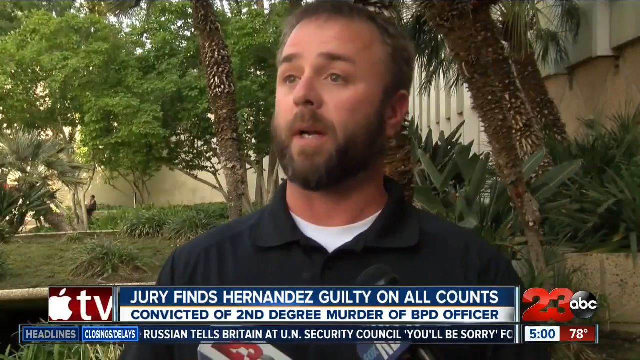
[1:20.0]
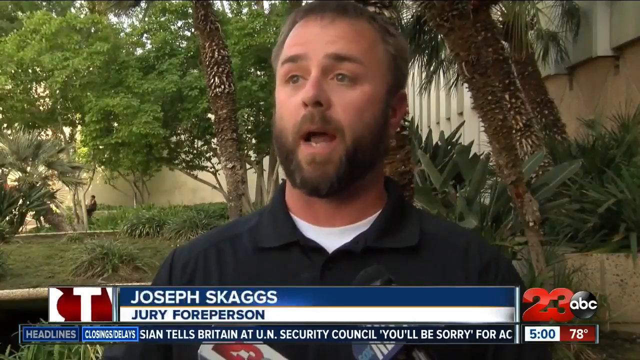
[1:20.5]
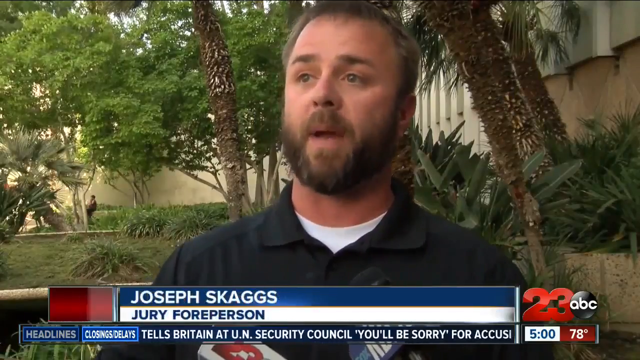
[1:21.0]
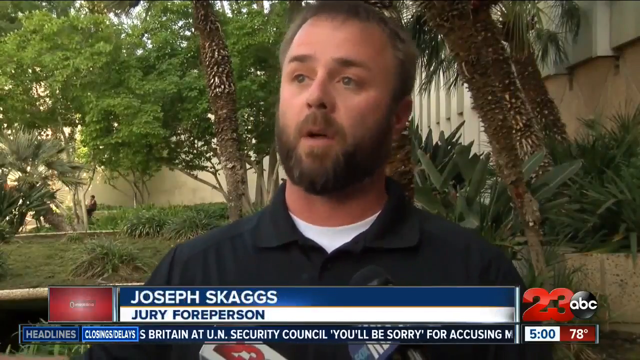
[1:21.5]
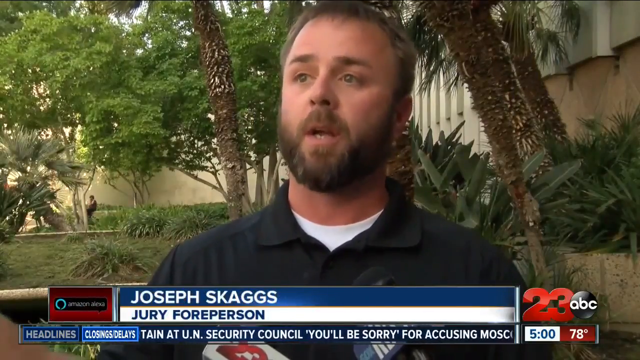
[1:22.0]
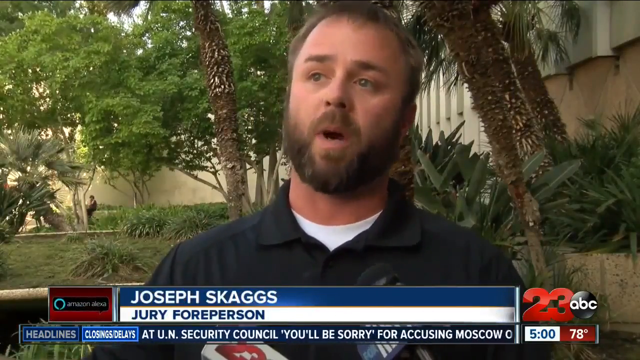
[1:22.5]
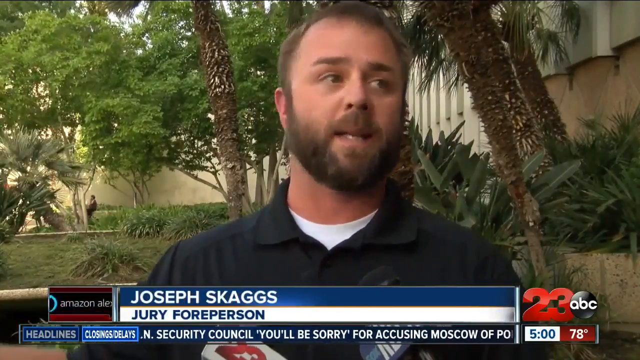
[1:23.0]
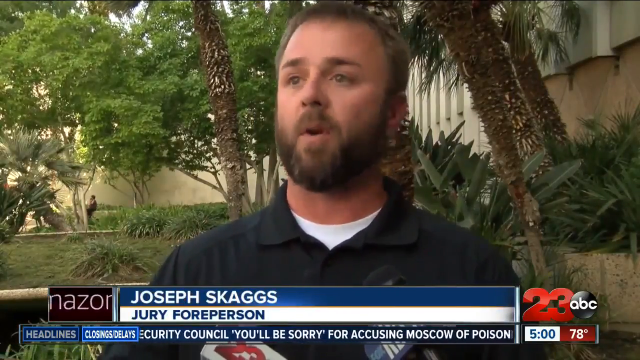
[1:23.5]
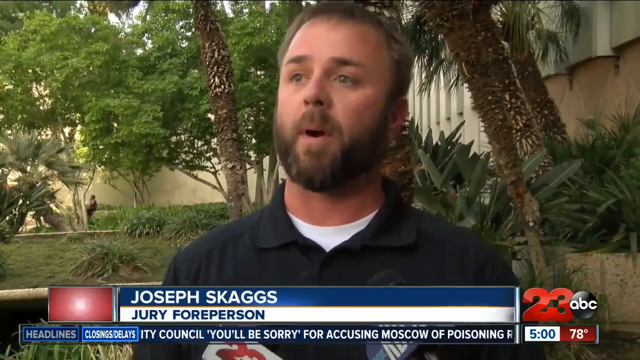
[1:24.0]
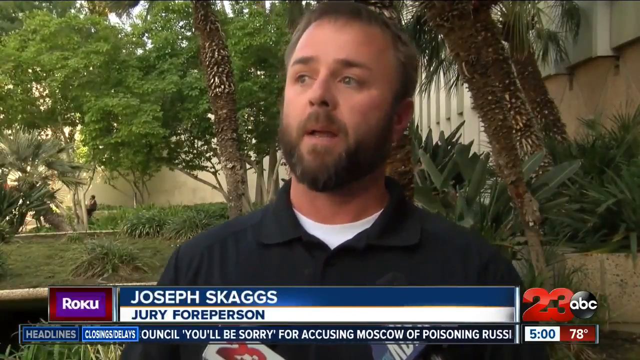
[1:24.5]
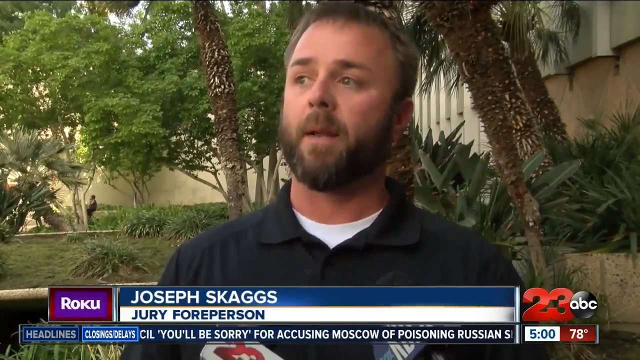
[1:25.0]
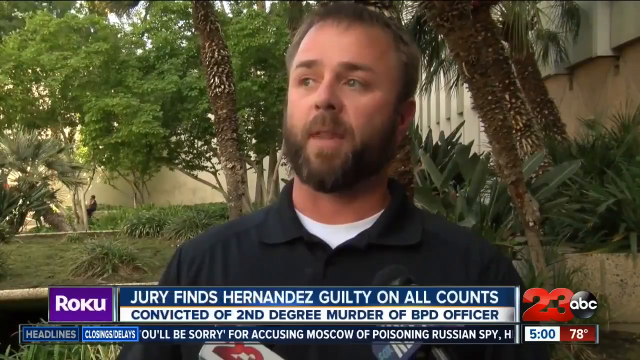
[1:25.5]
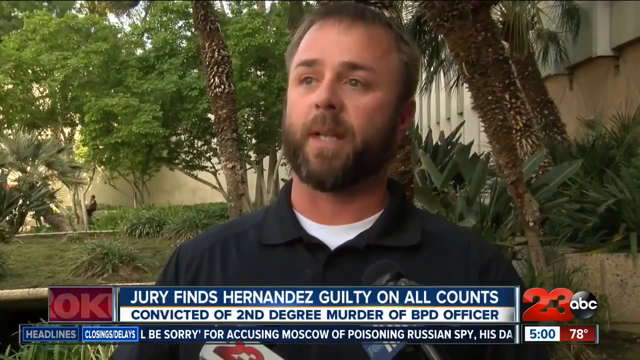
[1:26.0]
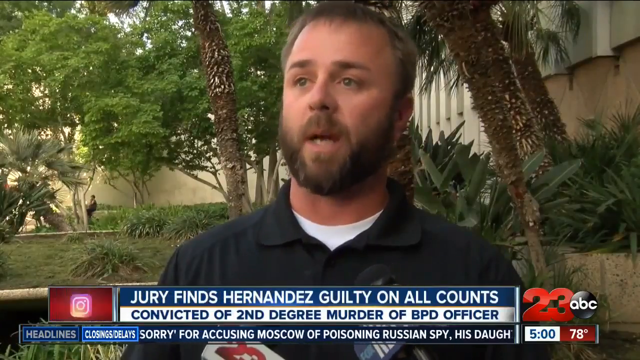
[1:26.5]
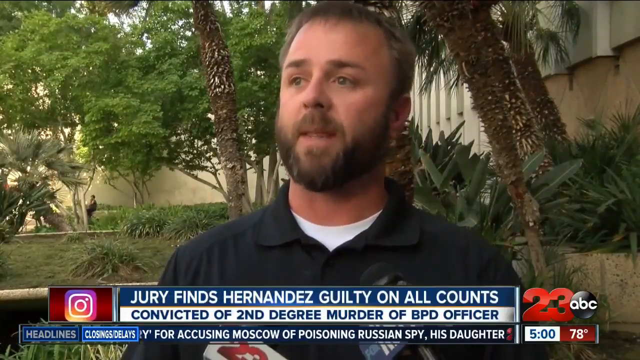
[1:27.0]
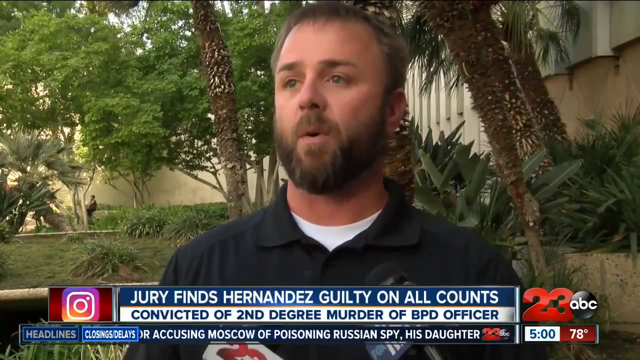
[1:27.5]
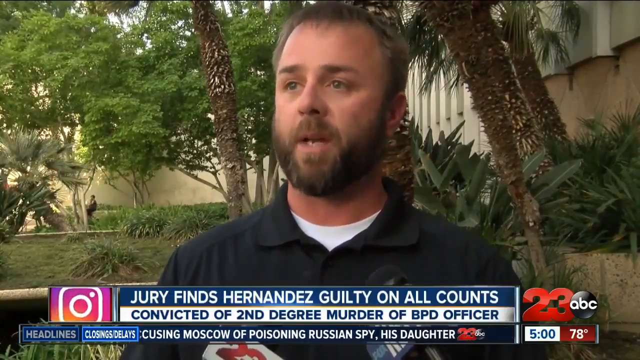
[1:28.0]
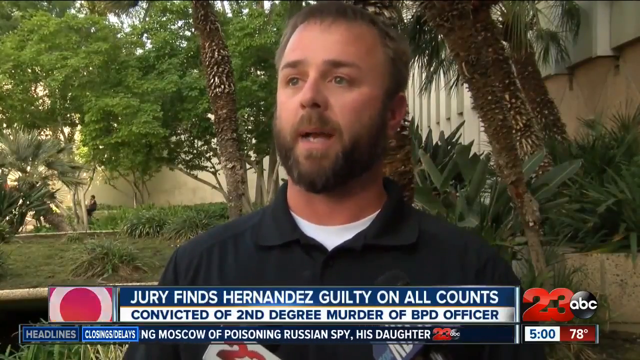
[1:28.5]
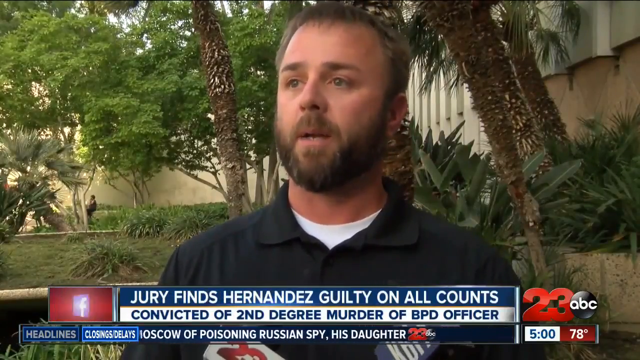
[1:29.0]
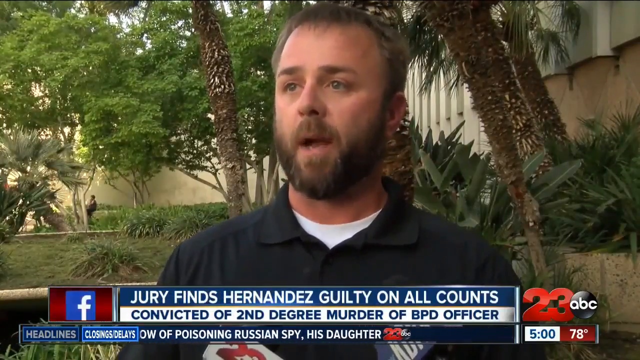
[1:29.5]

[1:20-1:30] The ABC 23 coverage continues under the headline "Jury finds Hernandez guilty on all counts." Right behind Hernandez at the trial is an office area with a Hello Kitty item, a 7 Up and an orange on a desk. A jury member, Joseph Skags, gives a short interview.